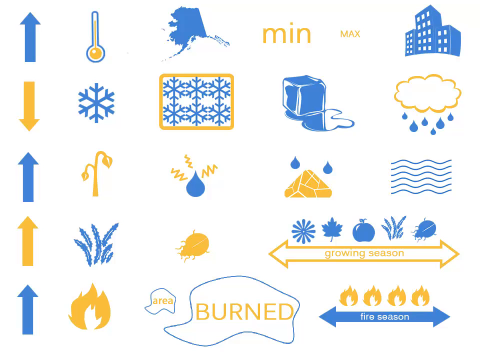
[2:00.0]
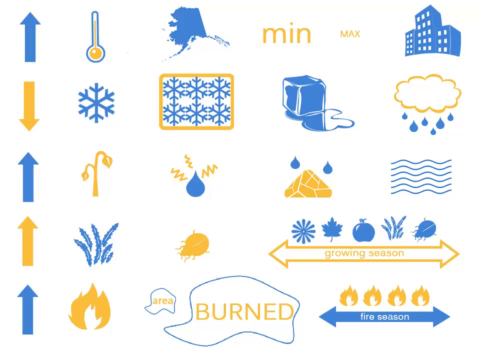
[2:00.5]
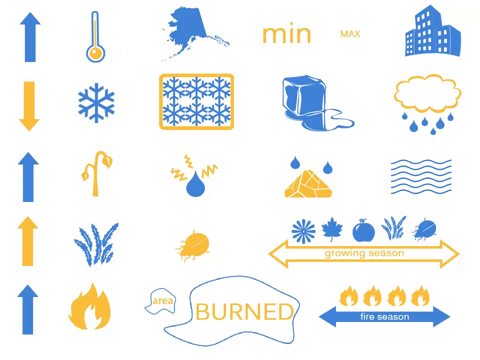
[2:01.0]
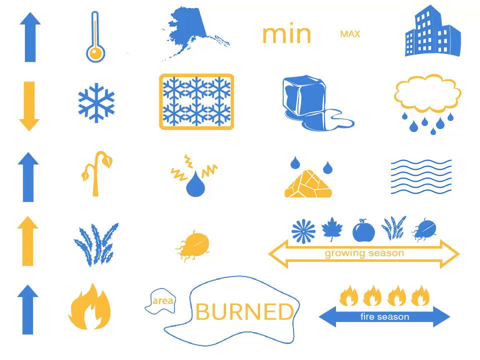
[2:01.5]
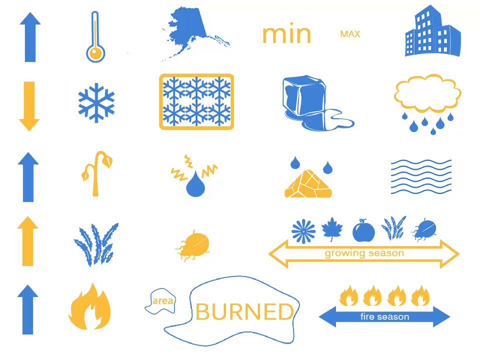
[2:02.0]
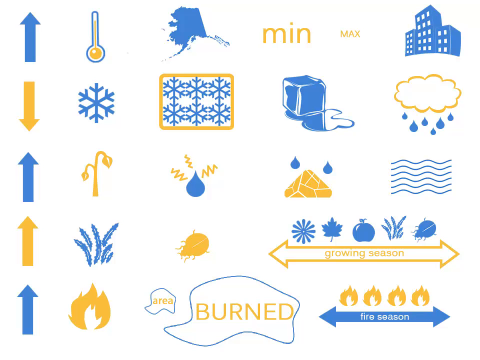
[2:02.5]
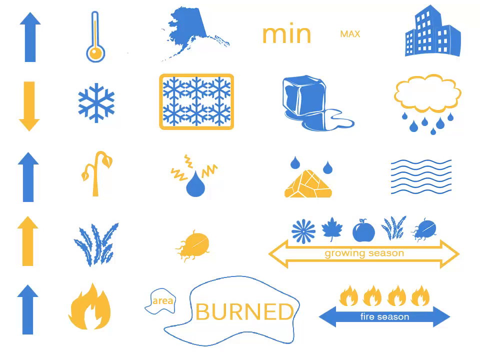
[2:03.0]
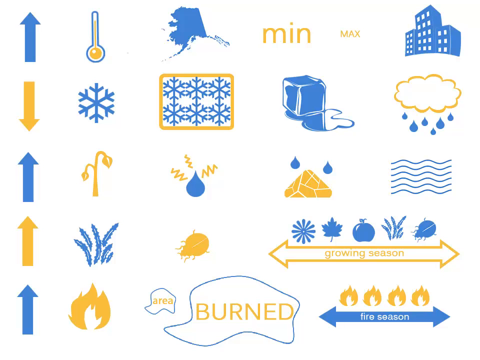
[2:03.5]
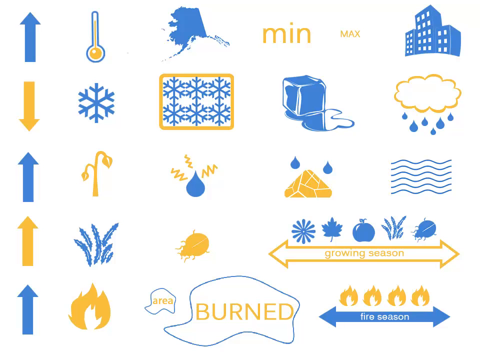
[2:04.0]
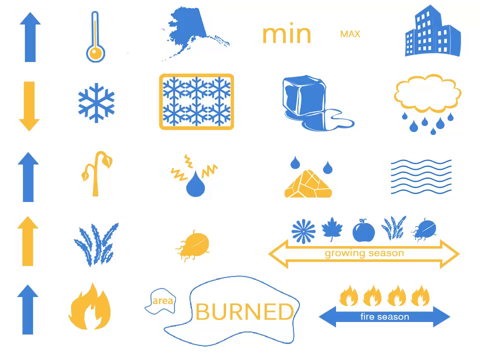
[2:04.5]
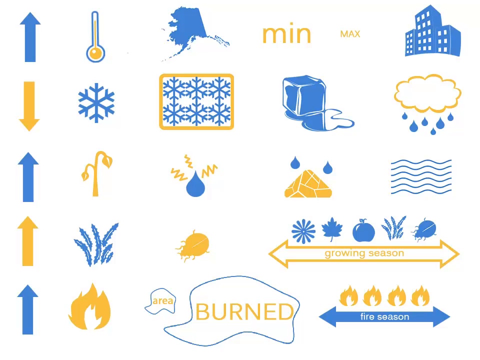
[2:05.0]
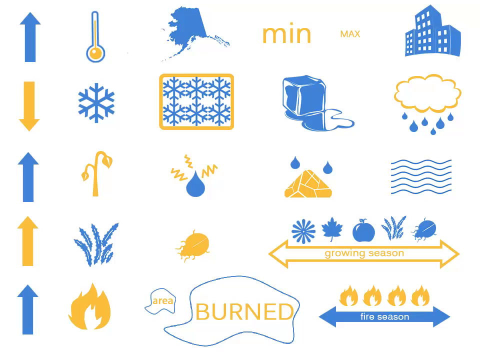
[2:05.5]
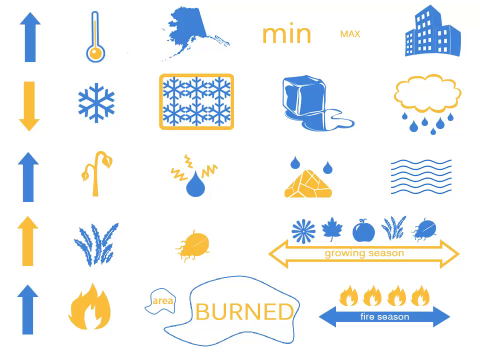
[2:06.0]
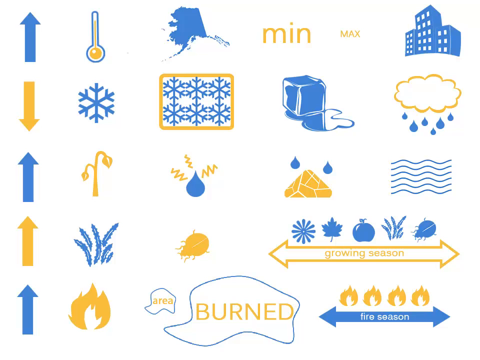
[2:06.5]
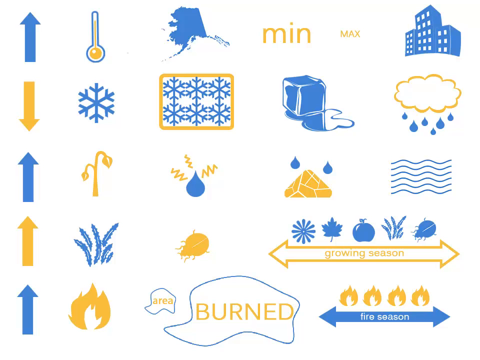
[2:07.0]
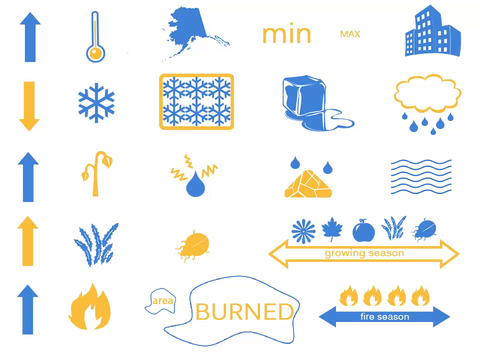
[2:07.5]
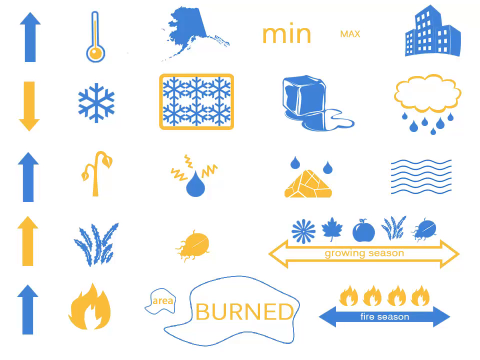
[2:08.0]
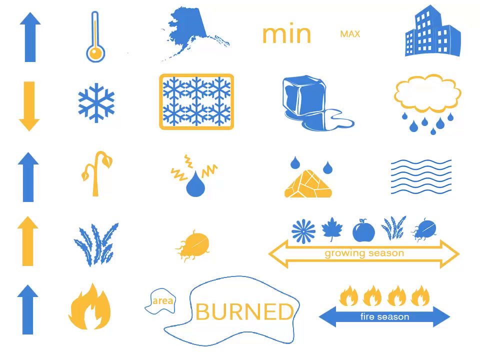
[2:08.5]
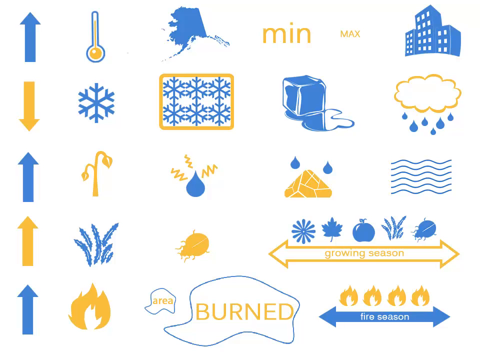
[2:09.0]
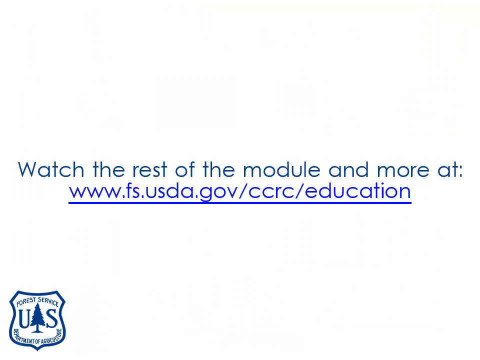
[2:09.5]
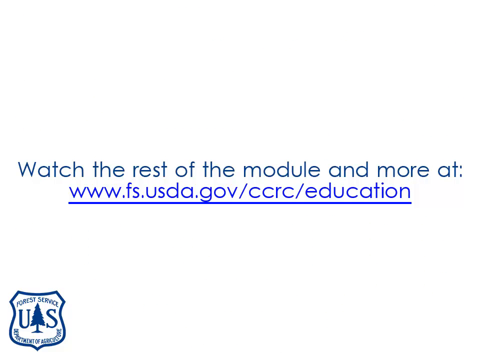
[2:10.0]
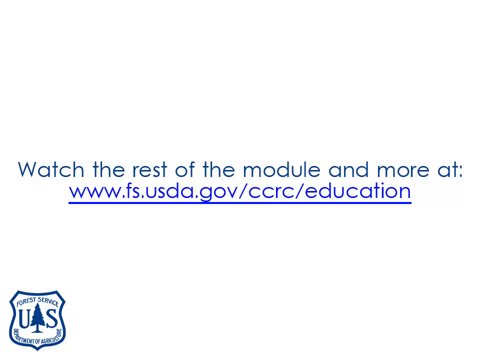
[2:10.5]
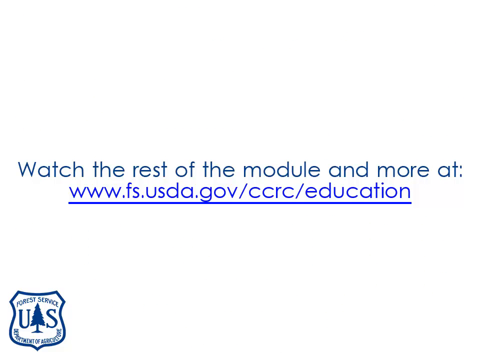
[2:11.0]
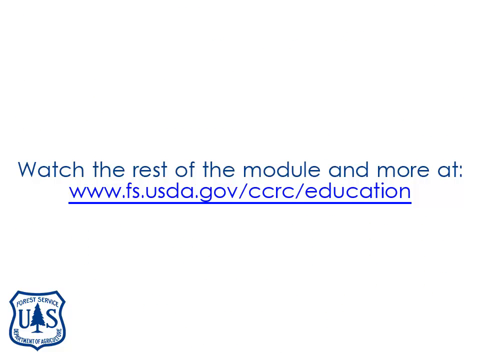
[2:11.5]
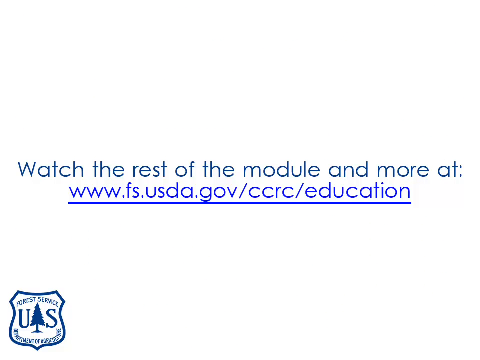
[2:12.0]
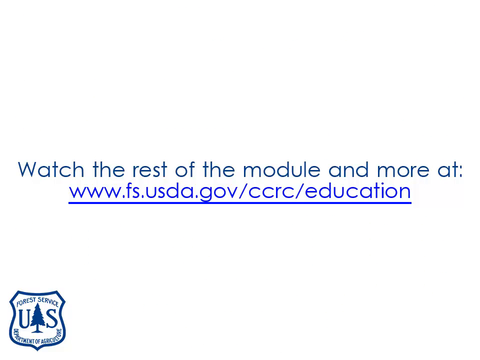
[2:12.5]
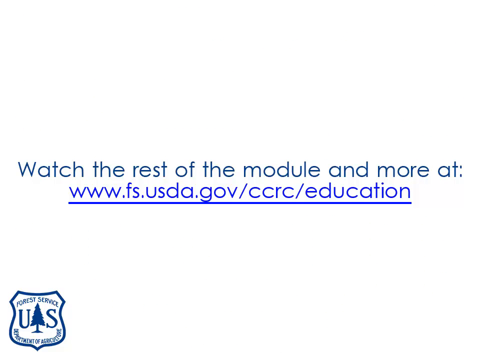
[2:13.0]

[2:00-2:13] The page with the white background and five rows of icons continues. The top row has the blue upward arrow, the thermometer or barometer image, the Alaska silhouette, Min, Max and the blue buildings. The second row has the downward orange arrow, the blue snowflake, the two rows of snowflakes in a rectangle, the melting ice cube and the cloud with raindrops. The third row has the upward-pointing blue arrow, orange shoot with two leaf tips, raindrop with spiky lines, triangle with two raindrops, and six wavy lines above one another. The fourth row has the upward-pointing orange arrow, spiky plant, orange ladybird beetle, and the orange growing season arrow with a blue plant icon, blue maple leaf, blue apple, blue spiky plant and blue ladybird above it. The final row has the upward-pointing blue arrow, fire icon, hat-like area burned icon, and the blue fire season arrow pointing both directions with four flames above it. The video remains on this page for some seconds, then ends on a title page reading "watch the rest of the module and more at www.fs.usda.gov/ccrc/education", underlined in blue, with the Forestry Service Department of Agriculture shield logo in the bottom left corner.